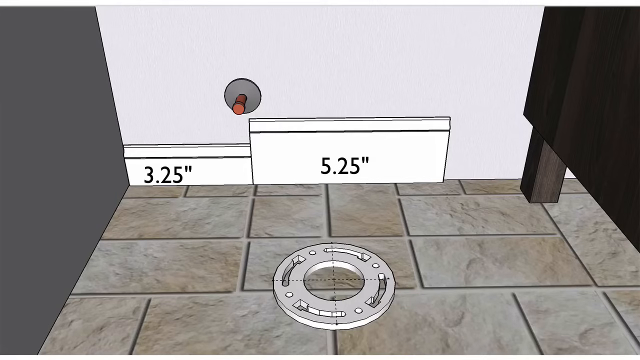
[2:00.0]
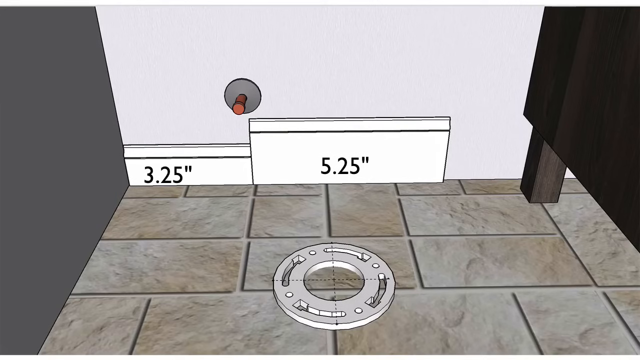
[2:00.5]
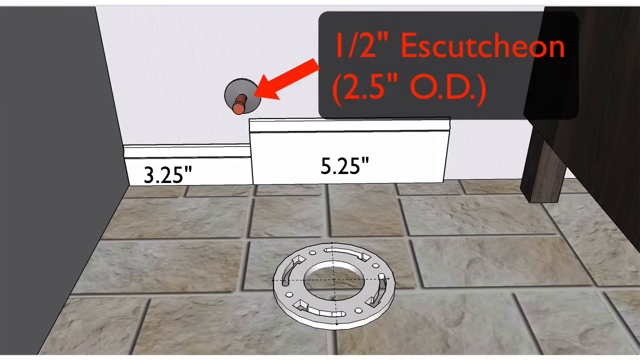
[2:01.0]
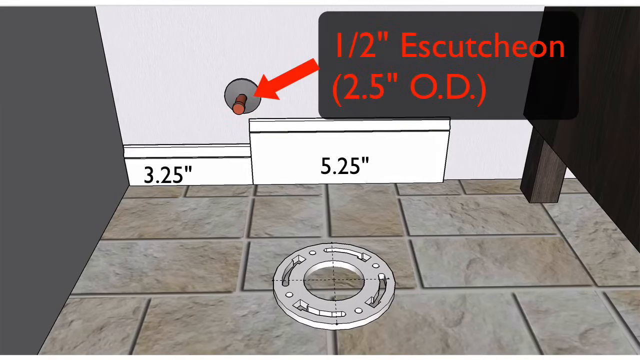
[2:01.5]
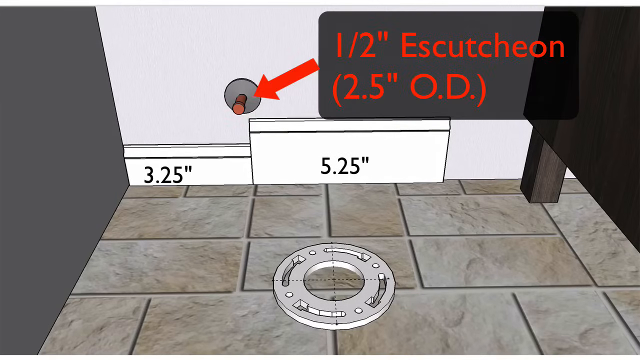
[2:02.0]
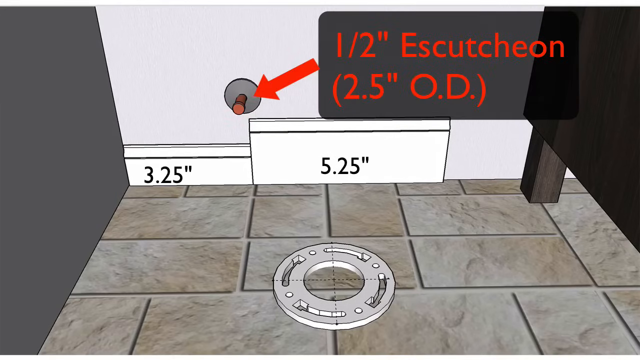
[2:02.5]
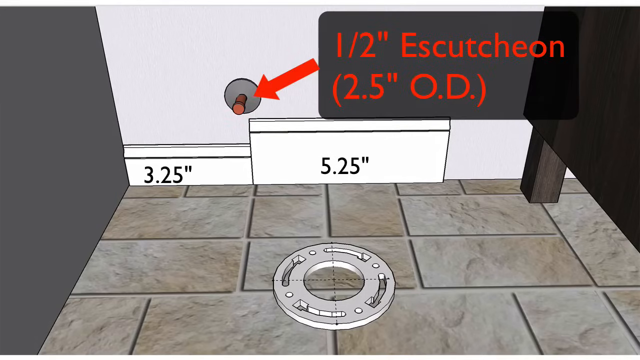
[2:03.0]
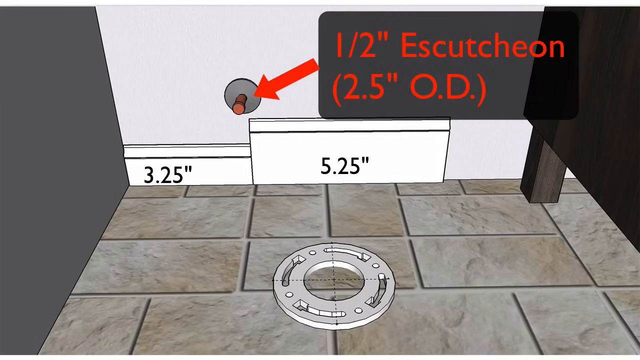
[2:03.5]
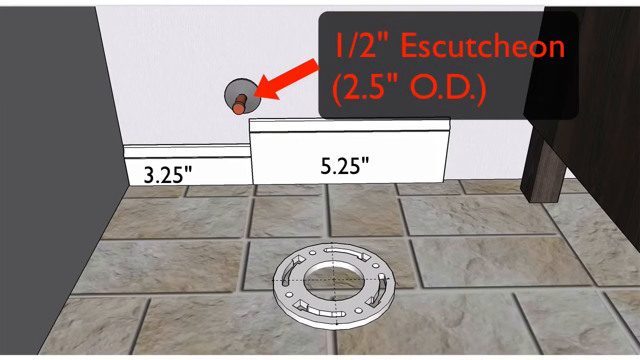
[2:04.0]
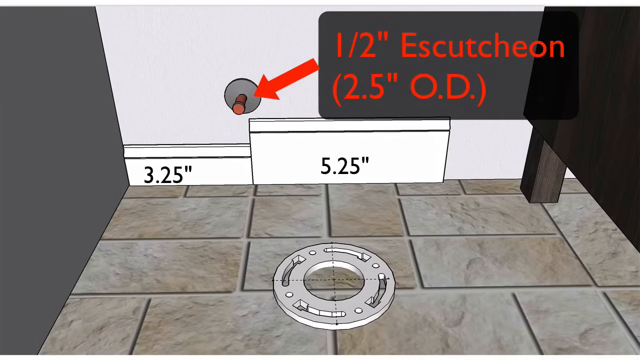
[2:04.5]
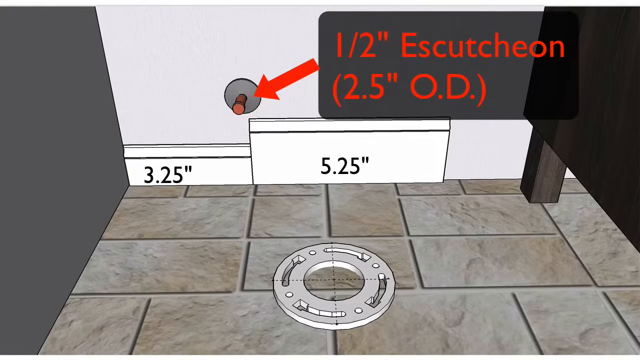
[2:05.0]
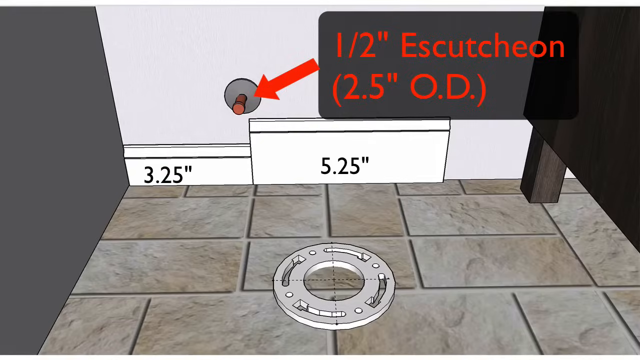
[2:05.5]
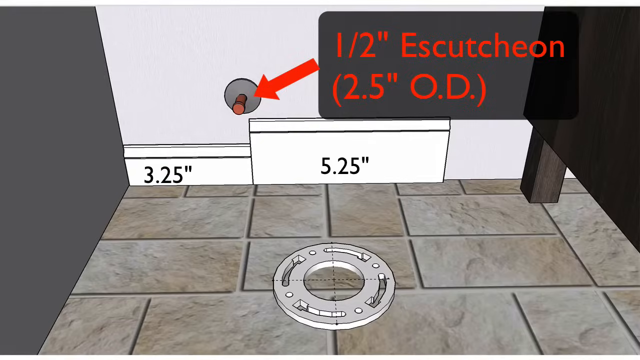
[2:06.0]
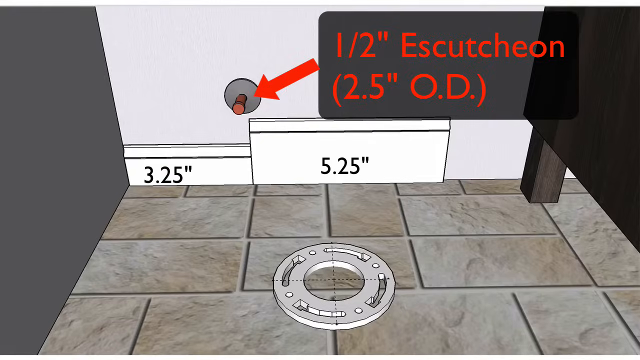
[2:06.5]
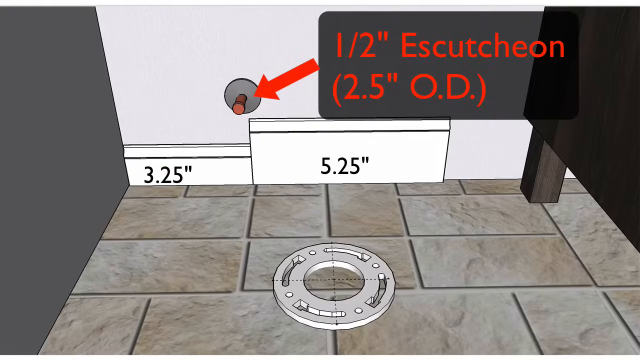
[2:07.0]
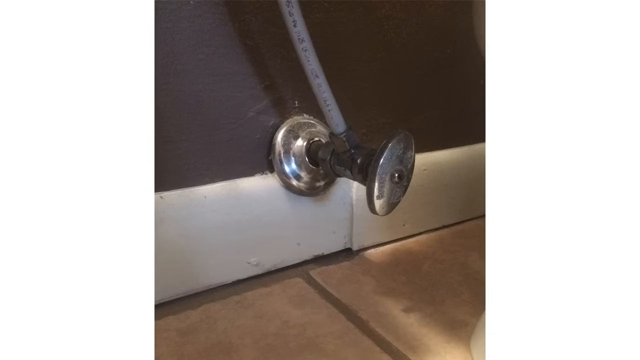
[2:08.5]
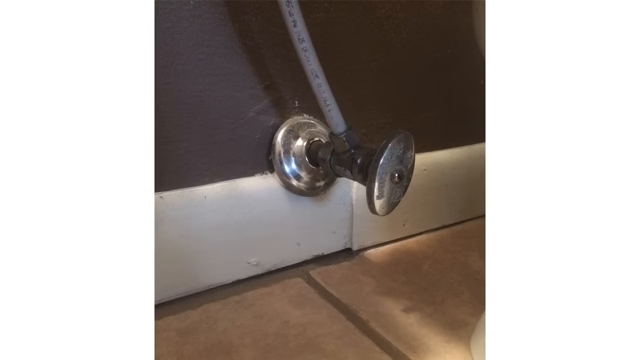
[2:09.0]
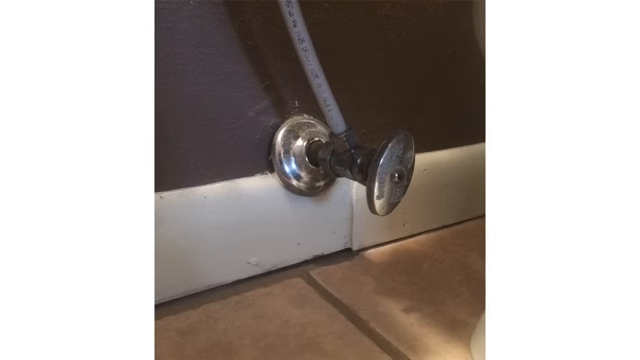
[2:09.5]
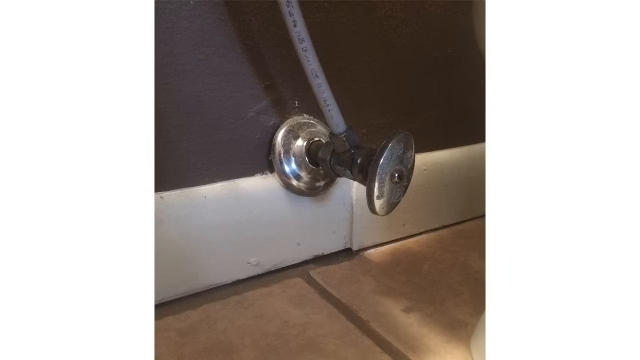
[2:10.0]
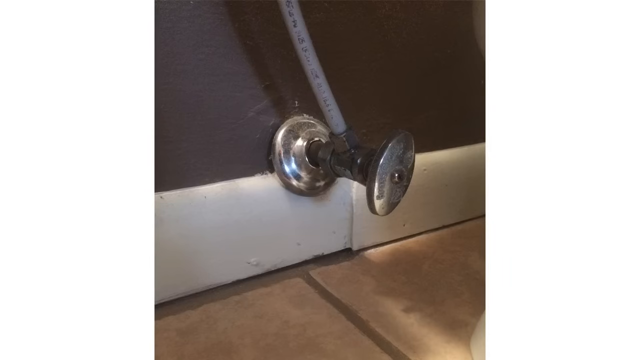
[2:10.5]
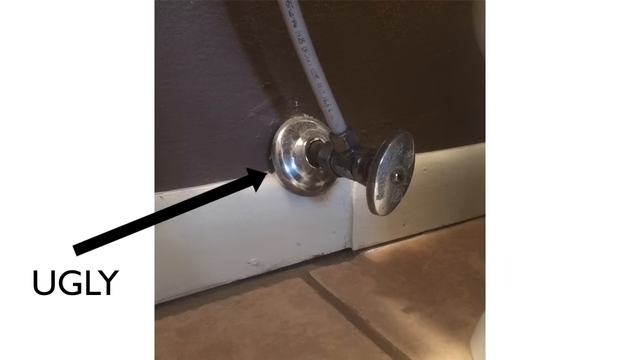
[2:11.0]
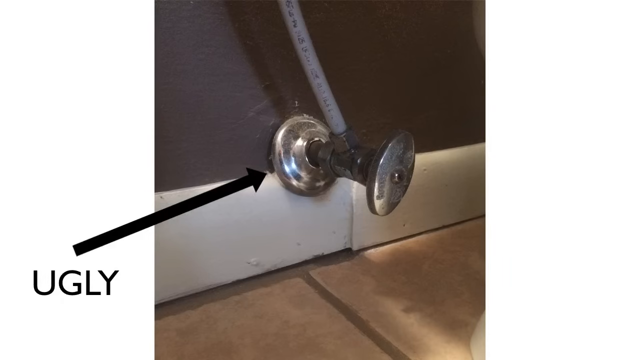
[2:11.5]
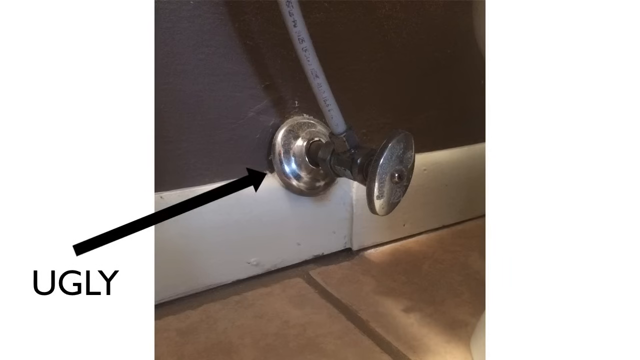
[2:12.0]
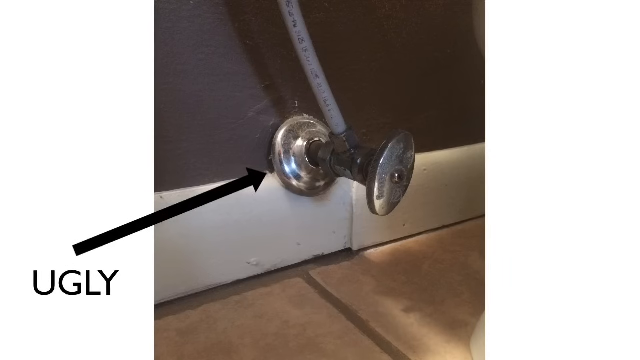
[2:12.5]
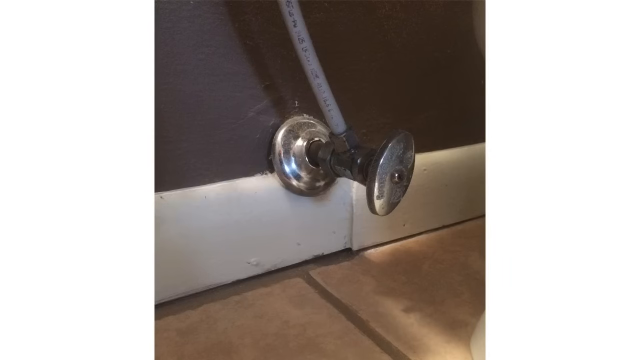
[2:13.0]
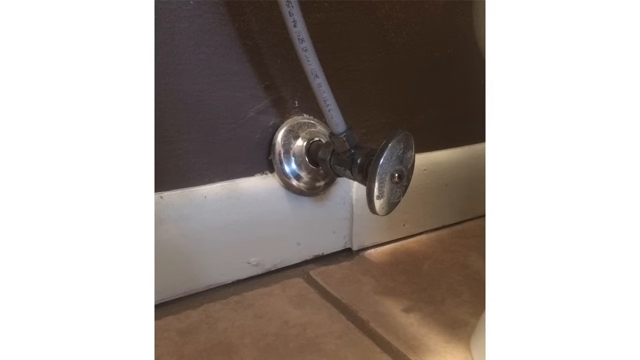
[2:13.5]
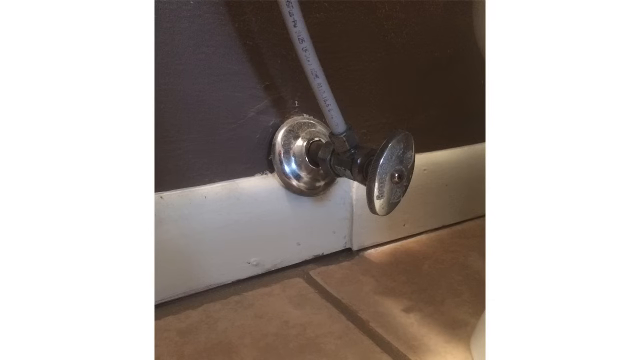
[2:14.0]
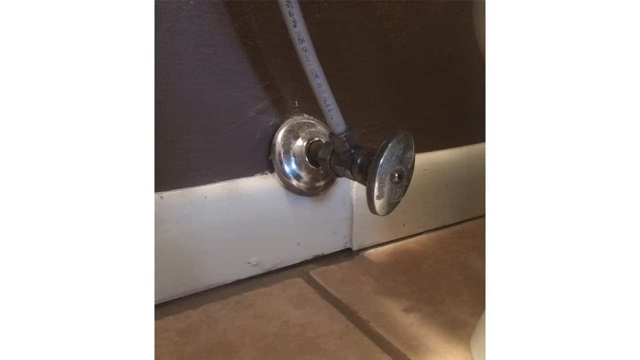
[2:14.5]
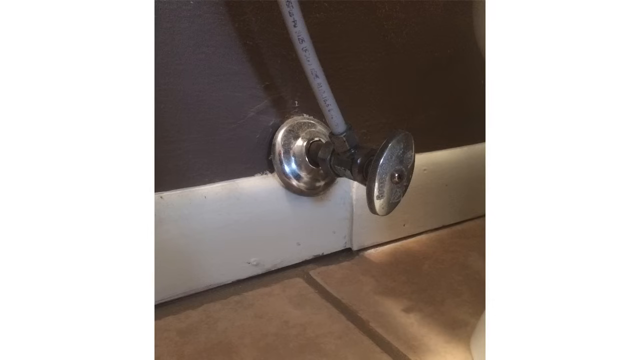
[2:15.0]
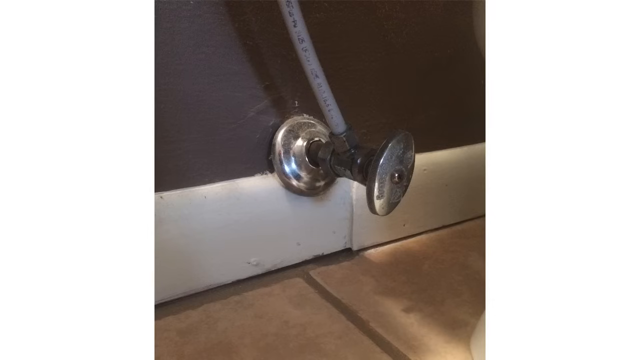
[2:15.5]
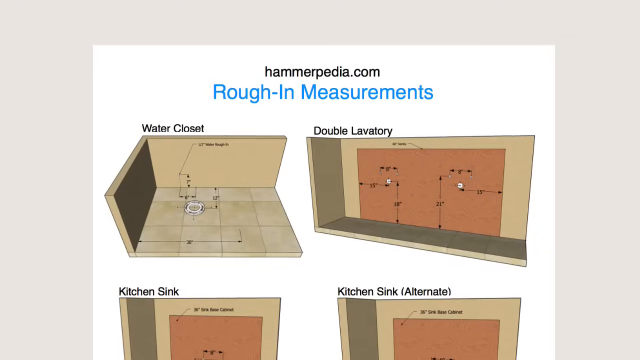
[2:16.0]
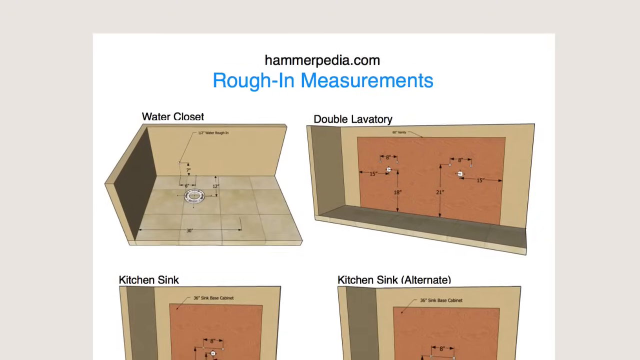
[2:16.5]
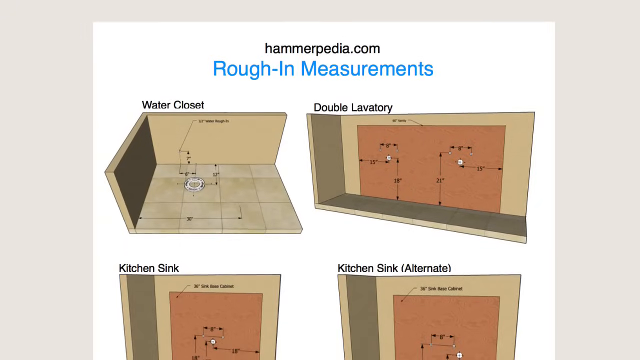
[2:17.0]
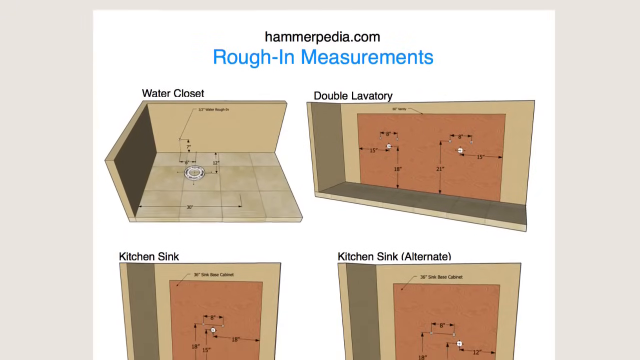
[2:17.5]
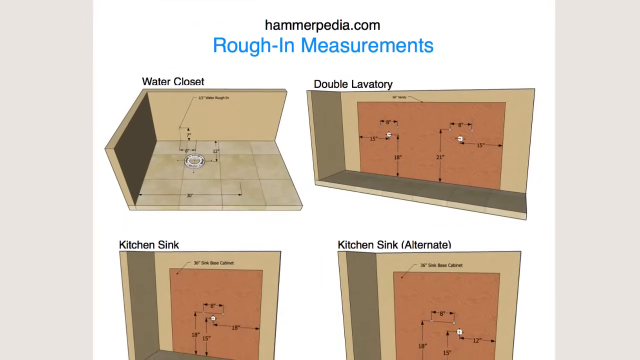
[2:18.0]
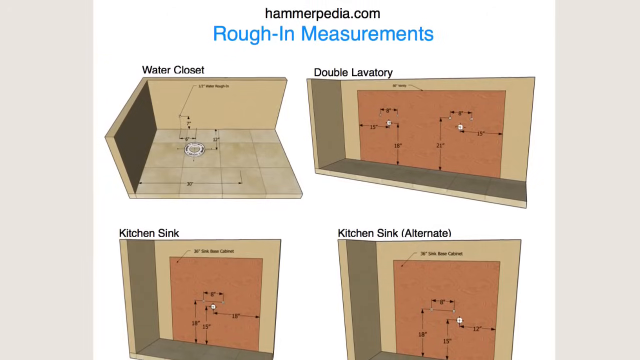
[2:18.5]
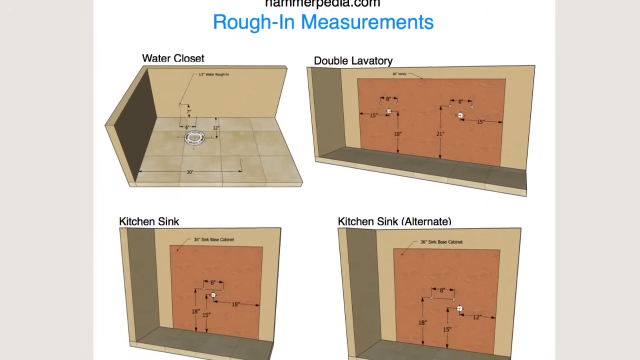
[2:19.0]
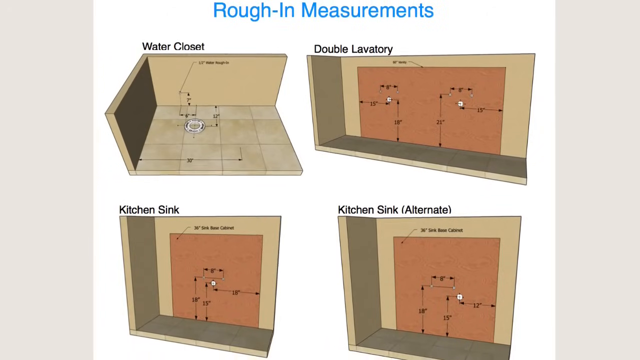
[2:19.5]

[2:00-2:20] What looks like the tiled floor of a toilet has a drain on it, with walls painted light grey on one side and dark grey on the perpendicular side. White wooden panels at the edge of the floor show the readings 3.25'' and 5.25''. Something that looks like a brown switch is on the light grey part of the wall, and a dark brown wooden cupboard is on the right side of the screen. The text "1/2'' Escutcheon" and "(2.5'' O.D.)" appears on a transparent dark grey background, with a red arrow pointing from it toward the brown switch on the wall. A blank white screen briefly appears, replaced by an actual image of a metallic switch with a light grey hose attached to it; it looks damaged. A long black arrow points at it from the text "UGLY". The arrow and text disappear, briefly leaving only the image. Animated wooden panels then rise from the bottom of the screen, four in all, with the text "hammerpedia.com" and "Rough-in measurements" on a white background at the top of the screen.